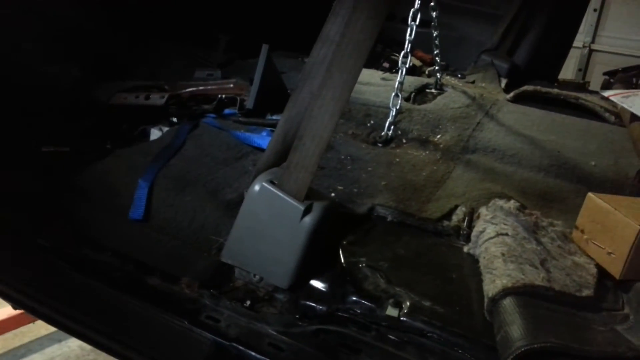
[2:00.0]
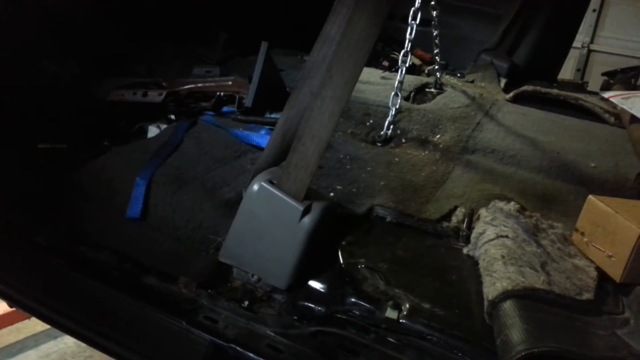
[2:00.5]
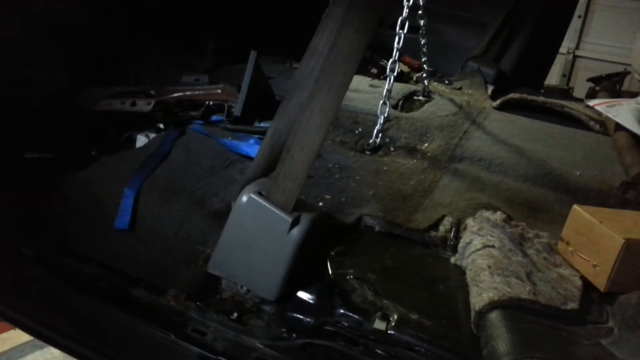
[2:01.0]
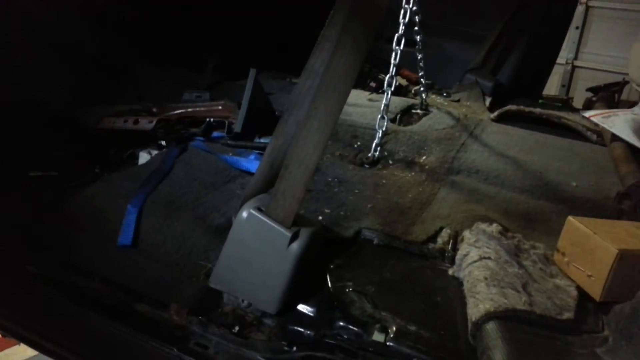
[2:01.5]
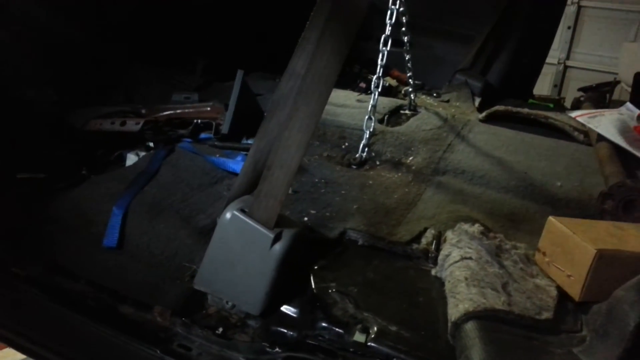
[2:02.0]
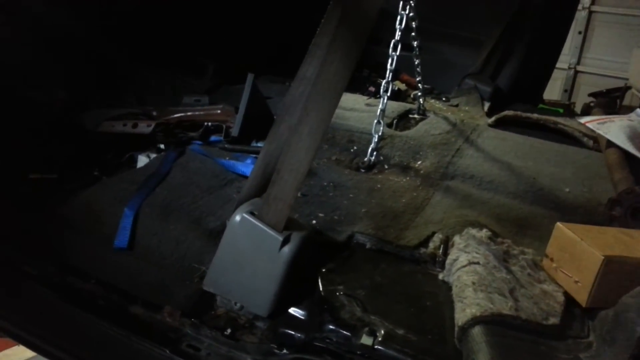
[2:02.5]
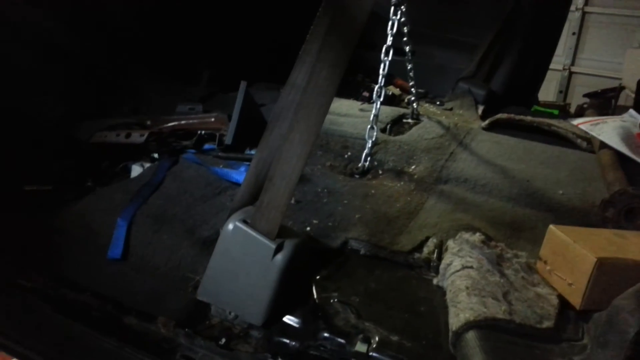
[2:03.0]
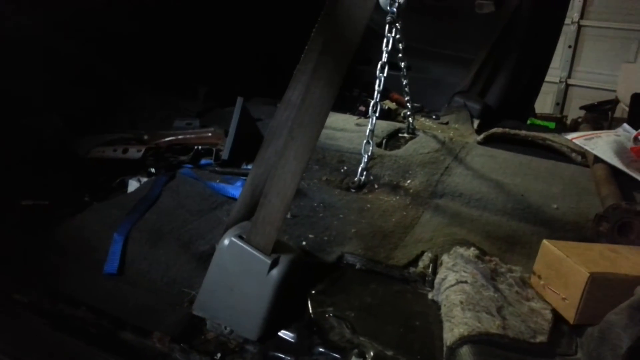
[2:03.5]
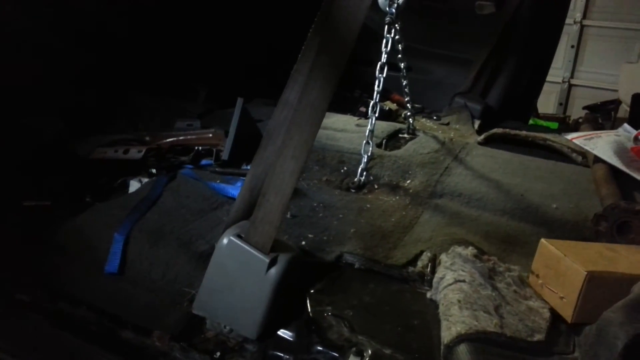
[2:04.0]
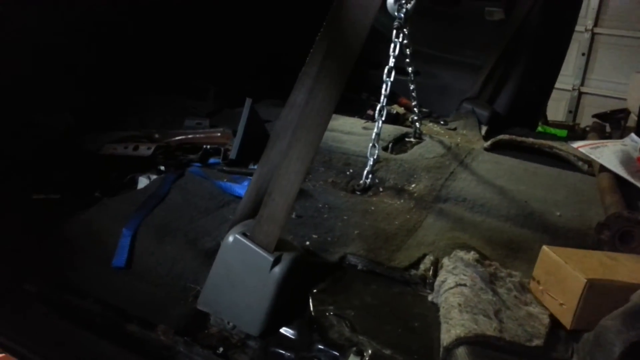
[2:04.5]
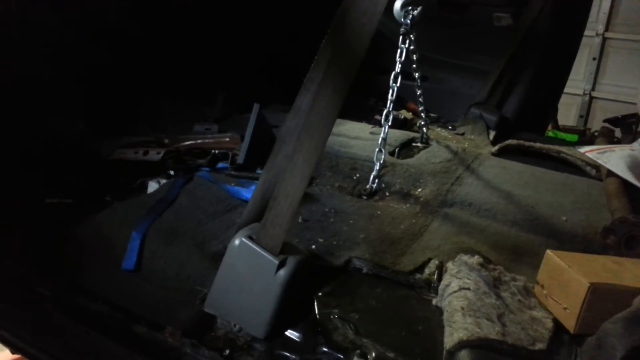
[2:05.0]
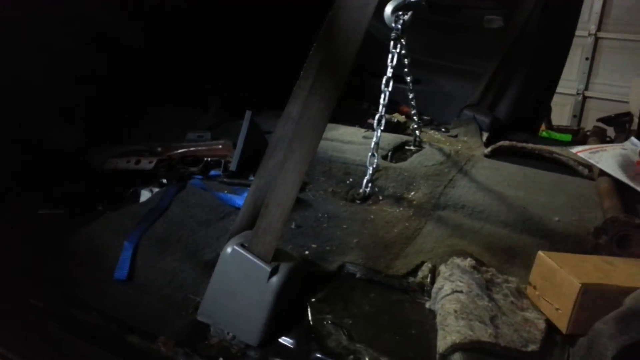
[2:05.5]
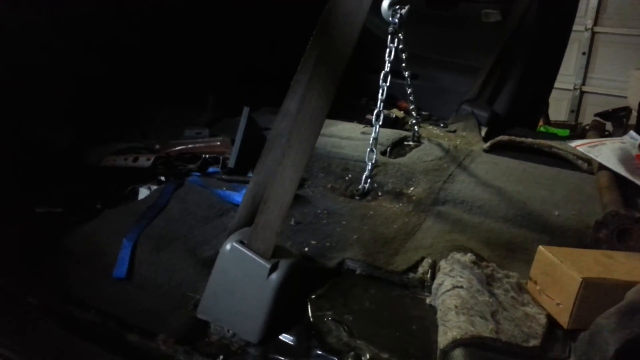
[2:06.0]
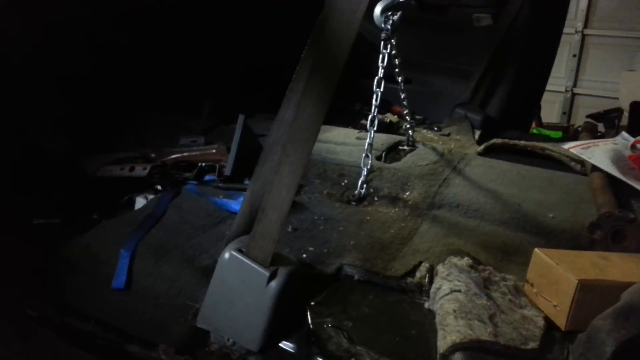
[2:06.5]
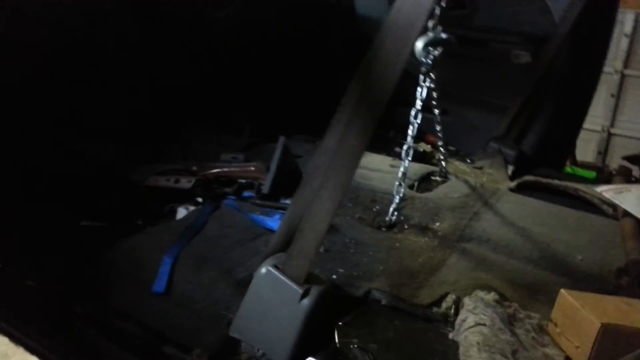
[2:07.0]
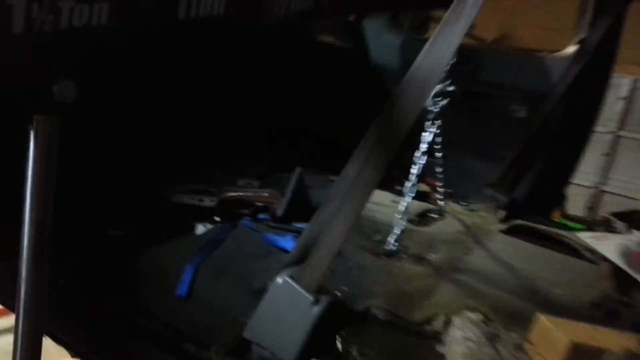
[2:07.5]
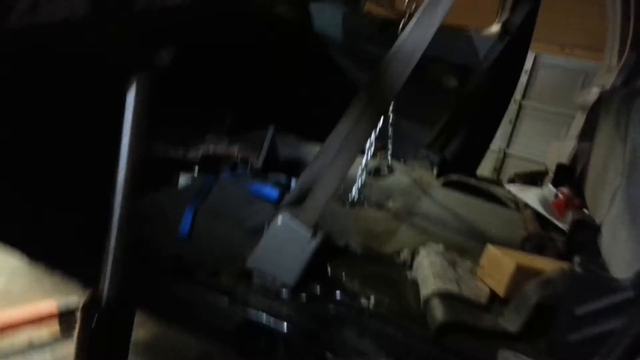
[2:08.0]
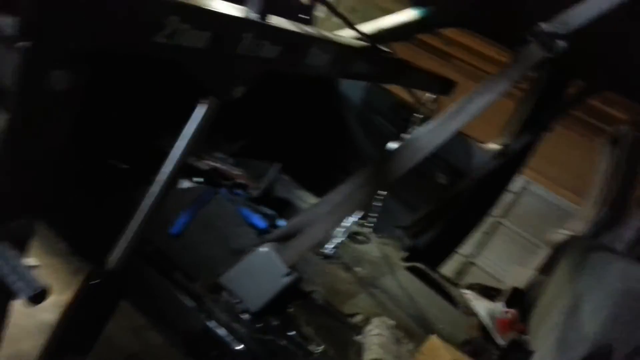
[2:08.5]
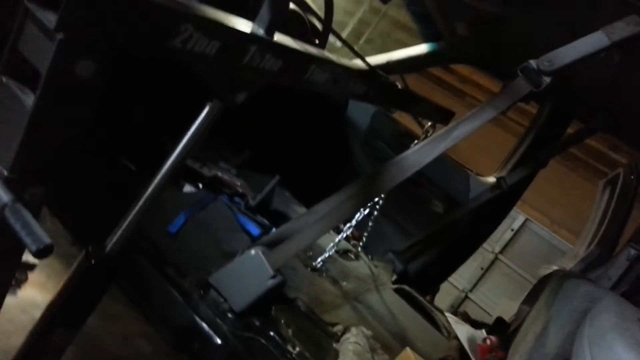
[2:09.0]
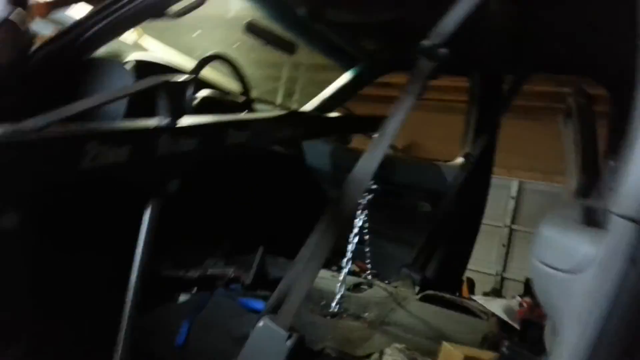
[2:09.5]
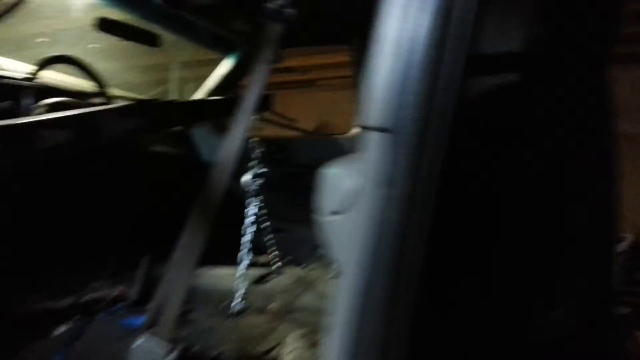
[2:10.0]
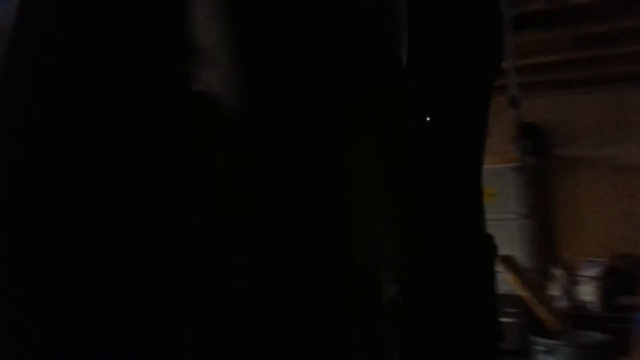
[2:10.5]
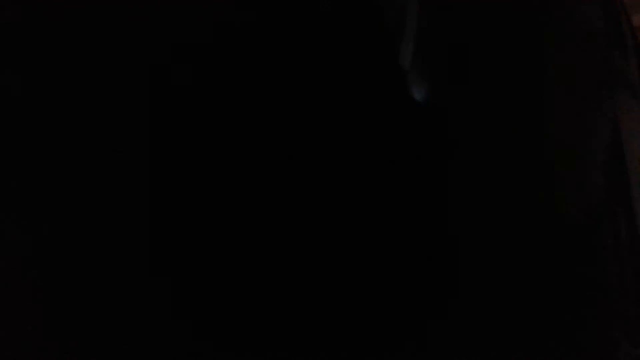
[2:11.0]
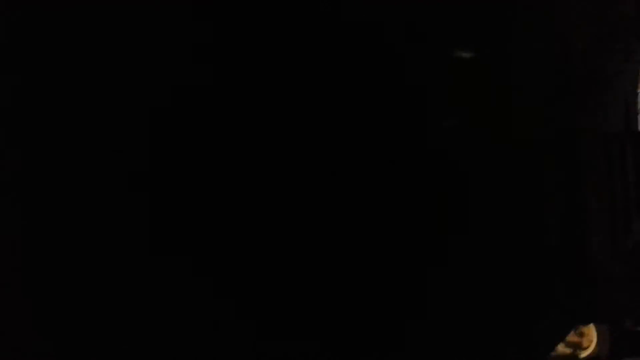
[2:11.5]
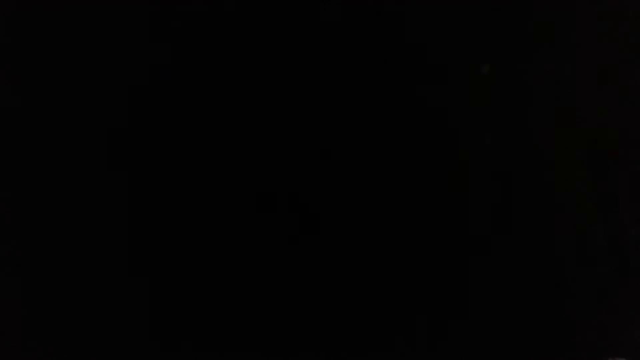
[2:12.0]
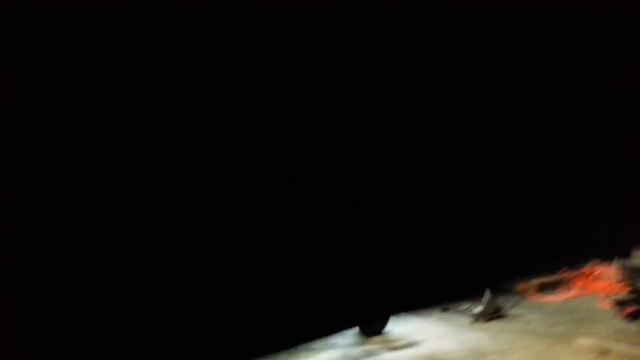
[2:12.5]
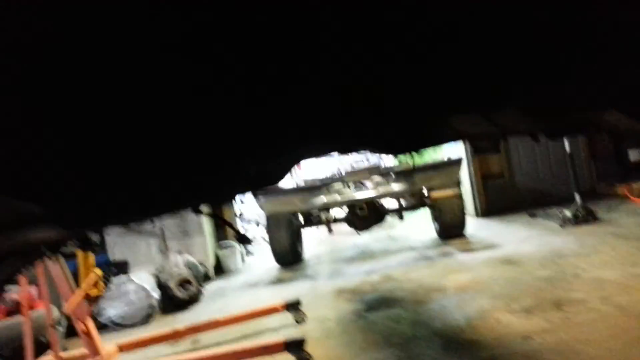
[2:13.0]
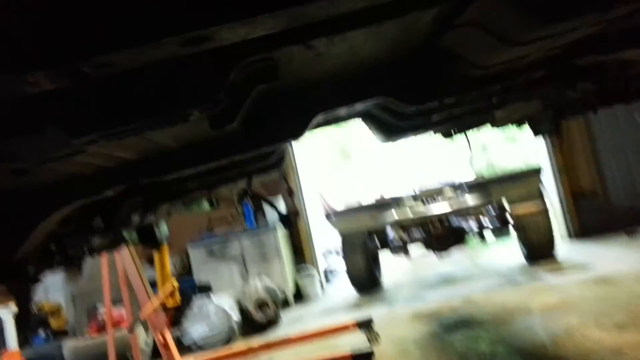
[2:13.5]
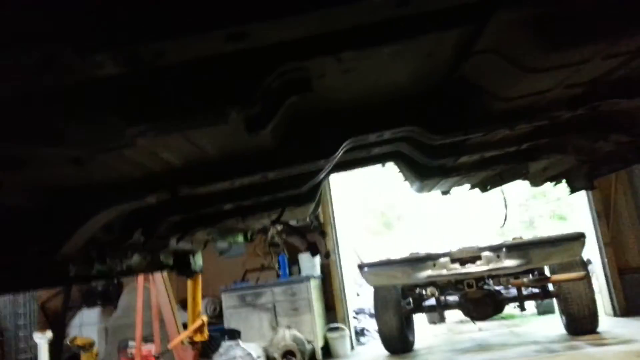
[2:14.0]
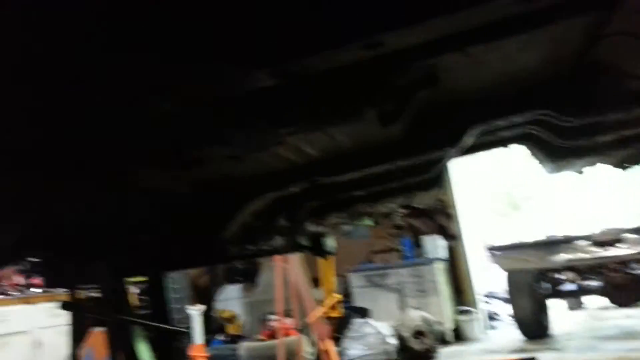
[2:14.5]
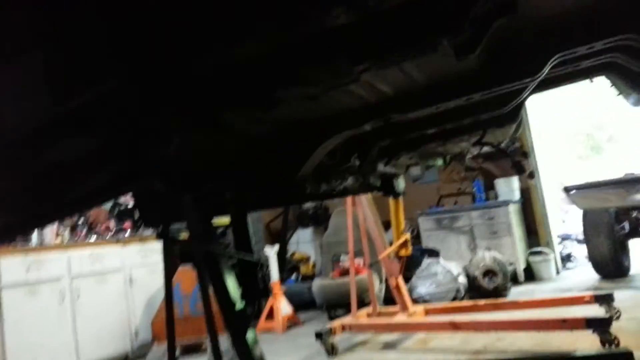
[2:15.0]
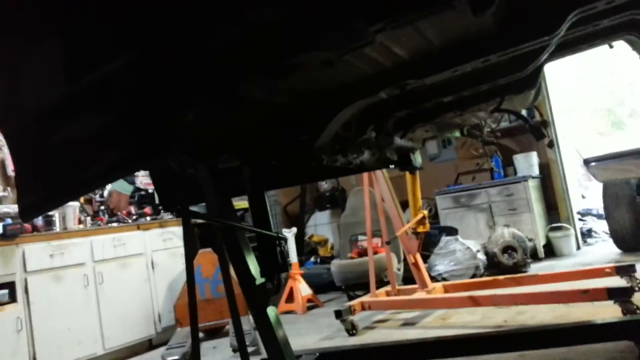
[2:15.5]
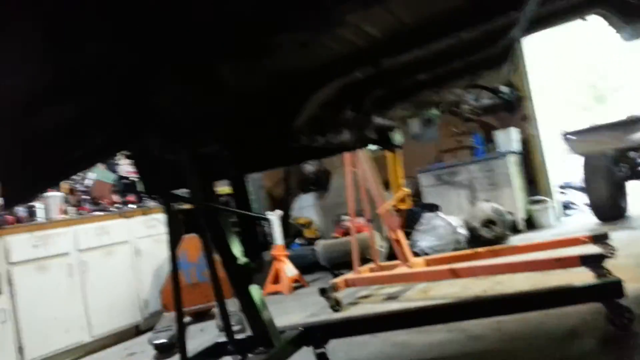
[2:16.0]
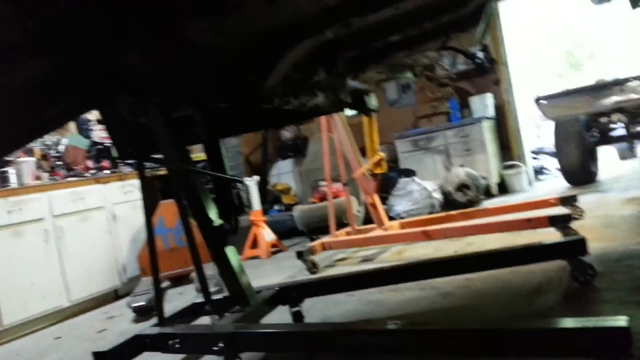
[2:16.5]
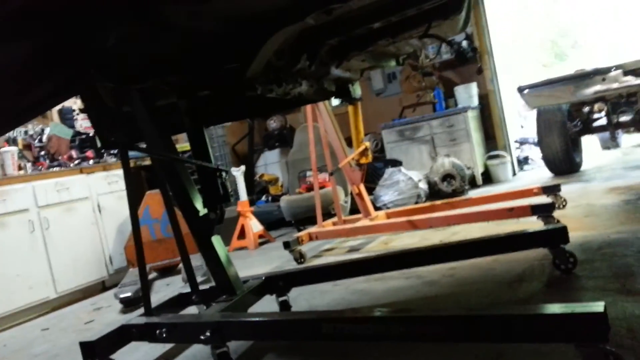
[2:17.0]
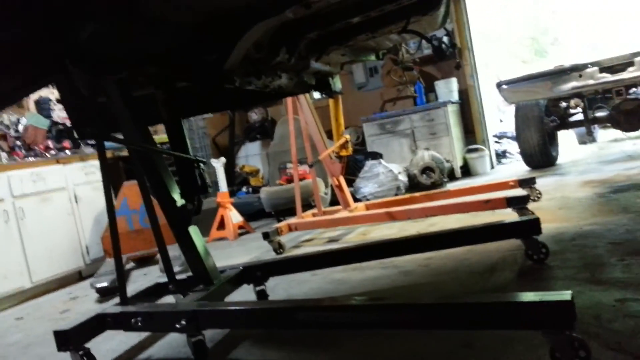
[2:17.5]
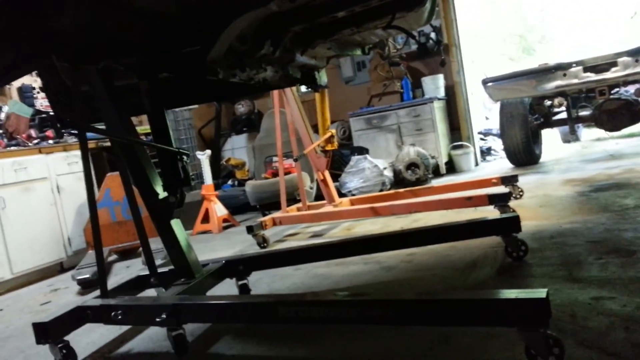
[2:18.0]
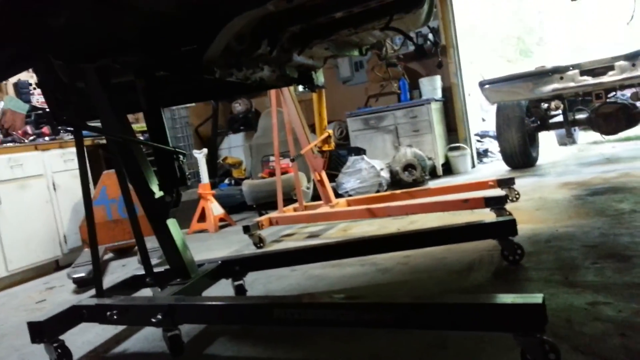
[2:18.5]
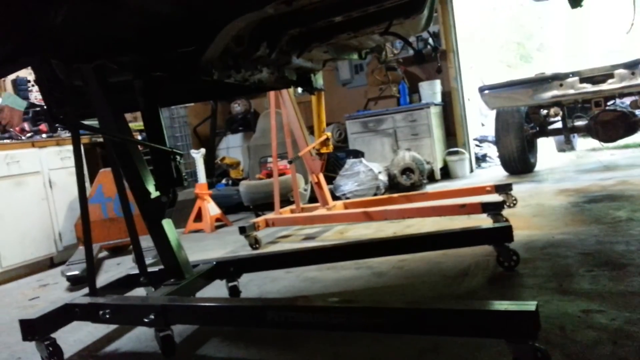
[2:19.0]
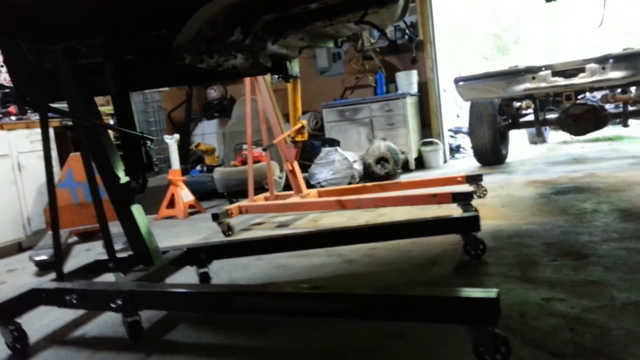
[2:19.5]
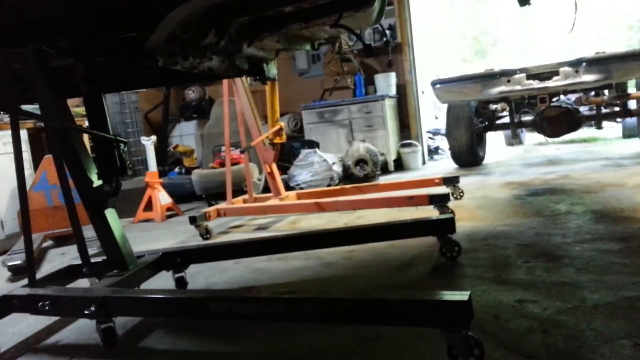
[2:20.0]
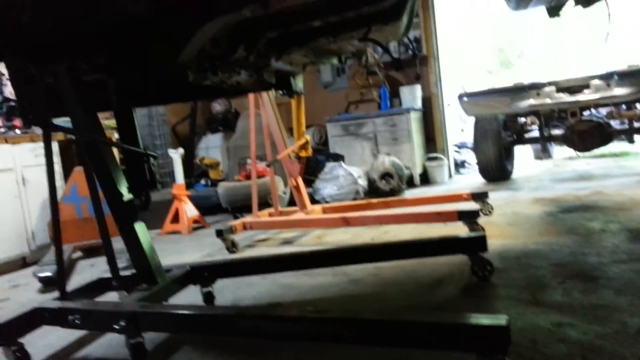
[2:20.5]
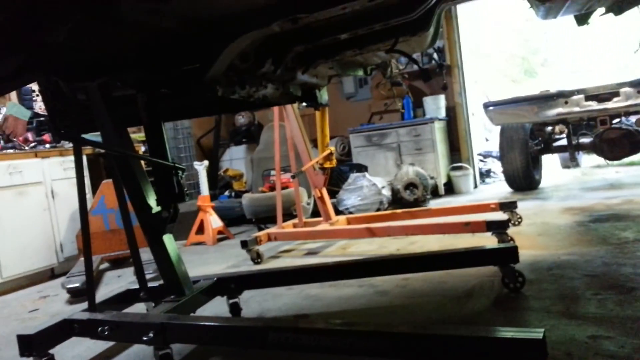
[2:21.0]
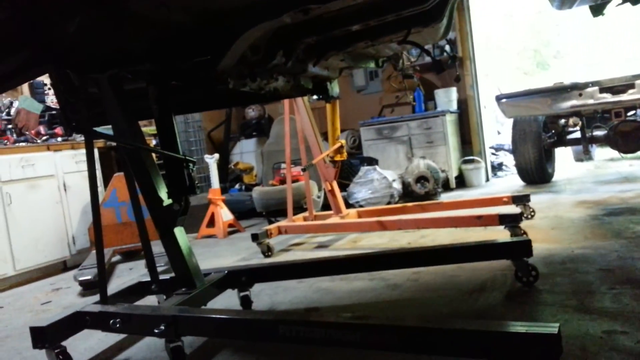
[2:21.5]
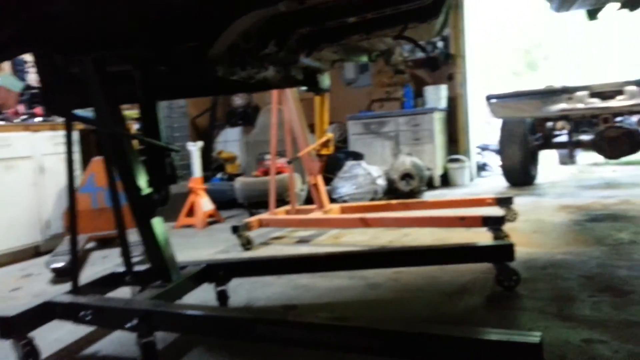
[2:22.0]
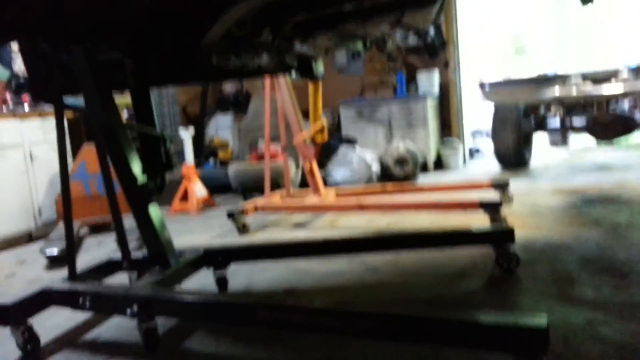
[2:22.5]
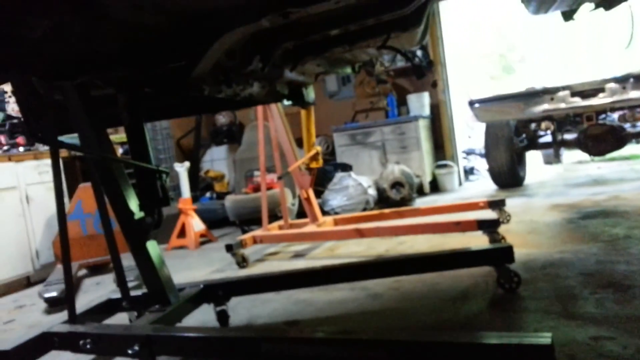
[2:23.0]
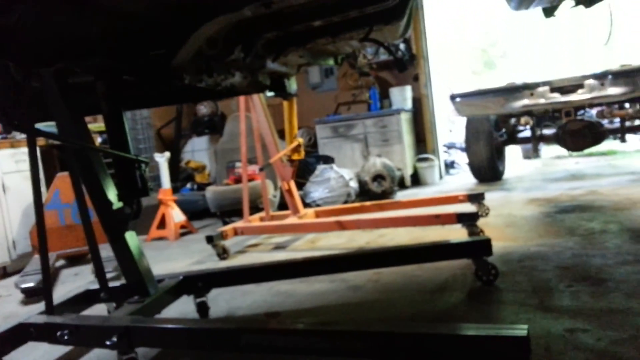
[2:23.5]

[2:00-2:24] After focusing on the floor for quite a while, the camera tilts diagonally, with the left side turning down and the right side turning up slightly. It then rights itself and starts to go around the back of the car. The screen goes mostly black for a moment, then it becomes clear the camera has gone underneath, showing an opening with what looks like a trailer parked in the middle of it. Along the left side are more typical garage items in storage. The camera moves toward this left side, where the other supporting lift under the car is visible, with the orange lift farther back. Along the side of the room are many more objects, including a storage cupboard near the garage opening, various bags and boxes, and a few orange items that look like they might be for signaling caution, just to the left of the crane. The video ends with this view from underneath the vehicle.